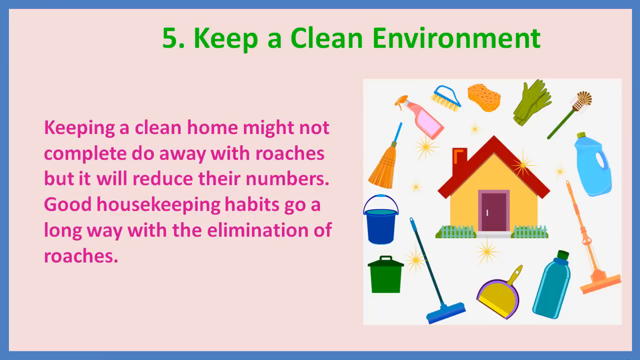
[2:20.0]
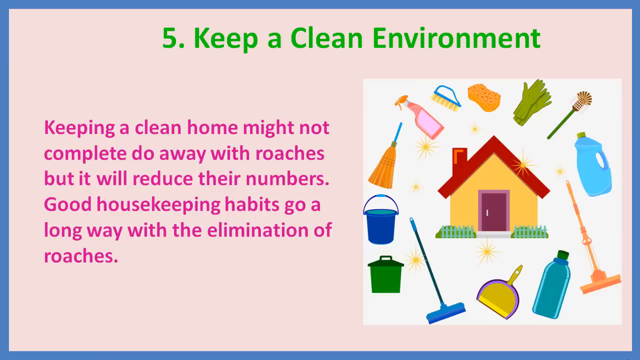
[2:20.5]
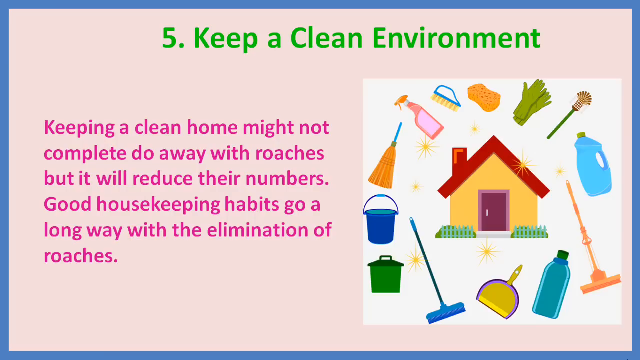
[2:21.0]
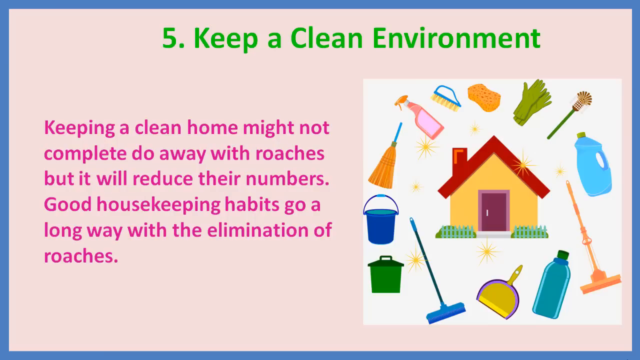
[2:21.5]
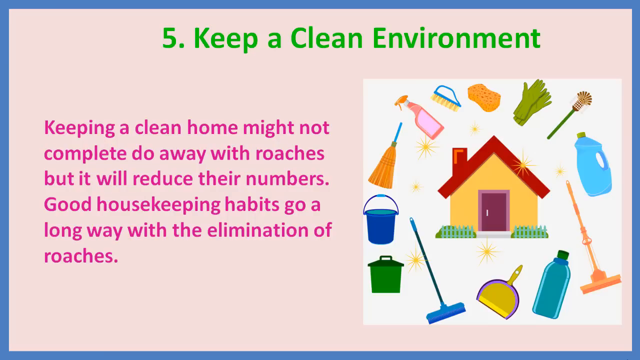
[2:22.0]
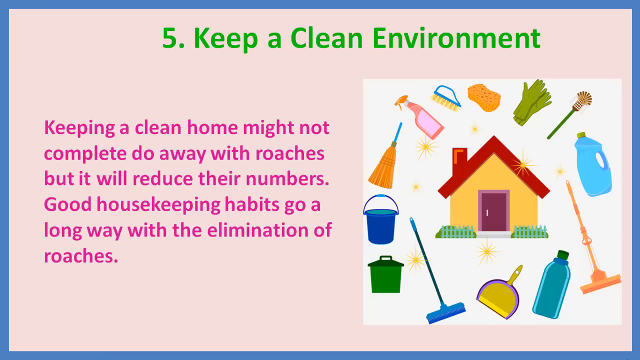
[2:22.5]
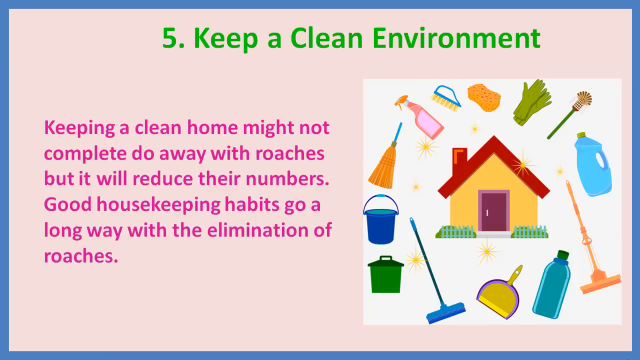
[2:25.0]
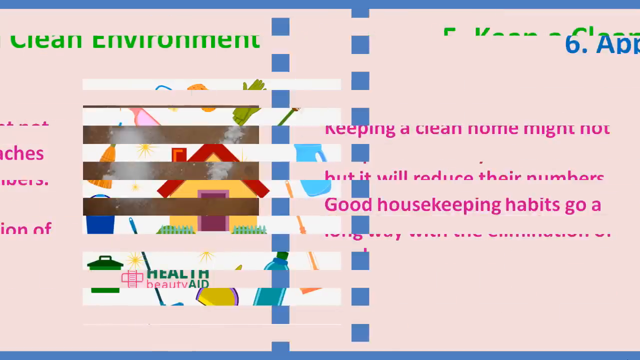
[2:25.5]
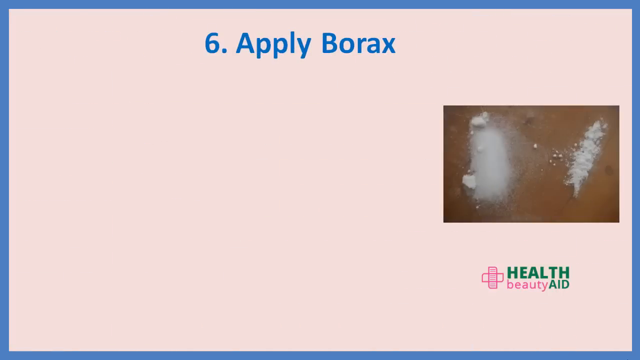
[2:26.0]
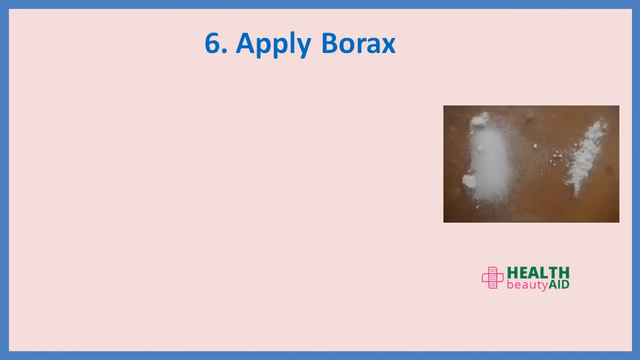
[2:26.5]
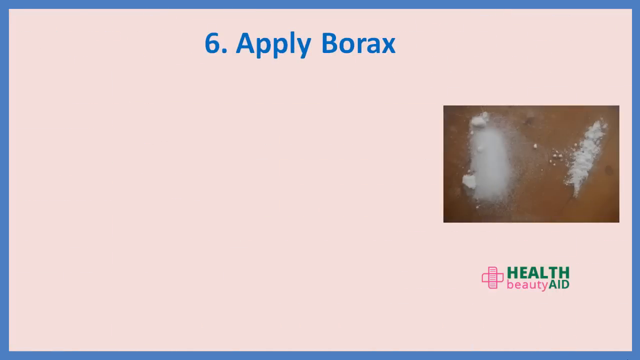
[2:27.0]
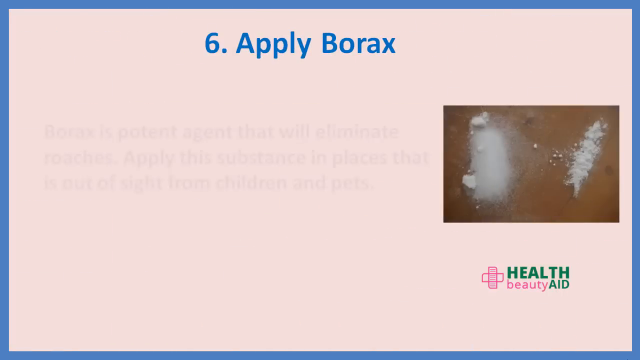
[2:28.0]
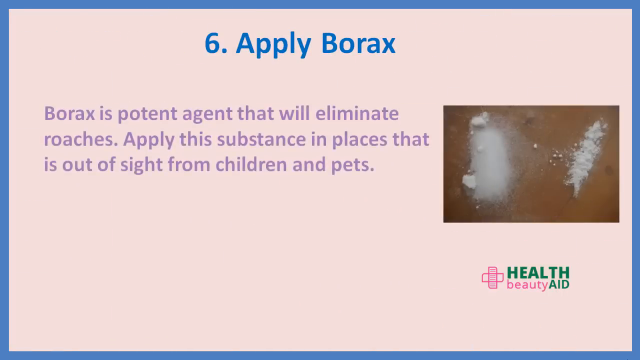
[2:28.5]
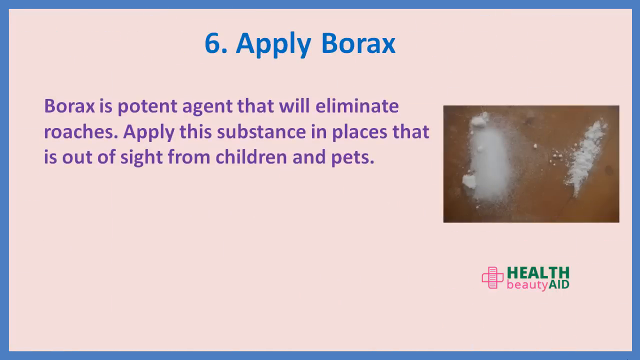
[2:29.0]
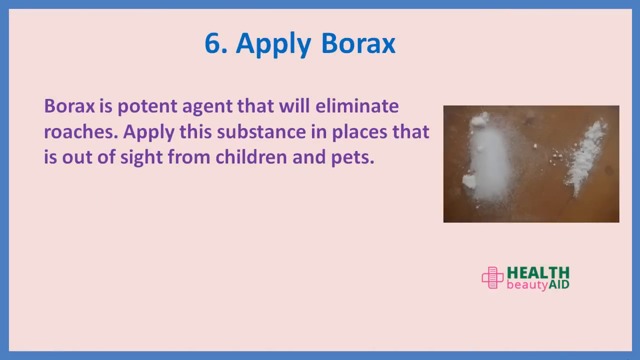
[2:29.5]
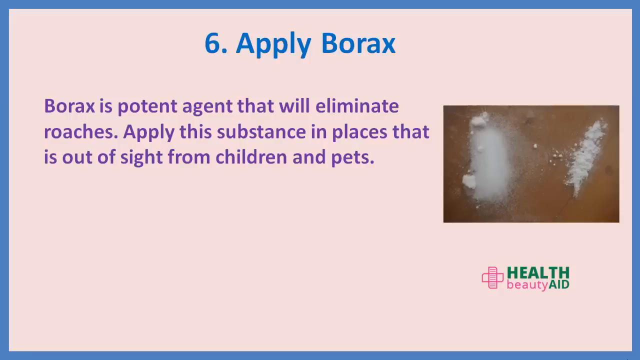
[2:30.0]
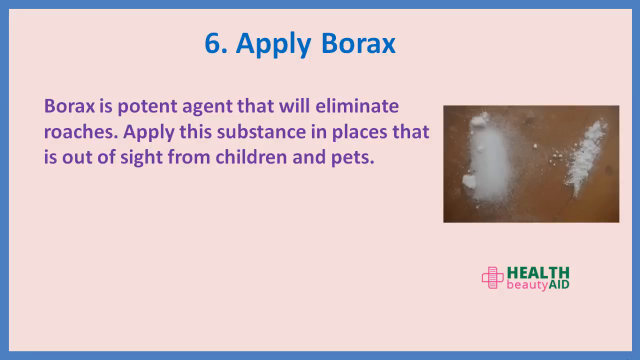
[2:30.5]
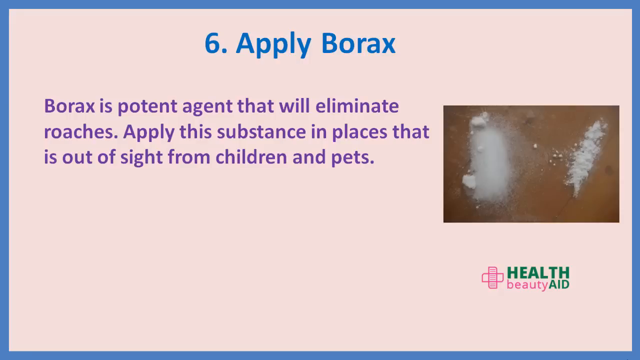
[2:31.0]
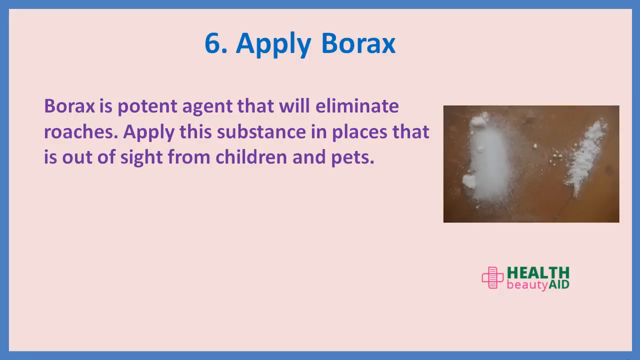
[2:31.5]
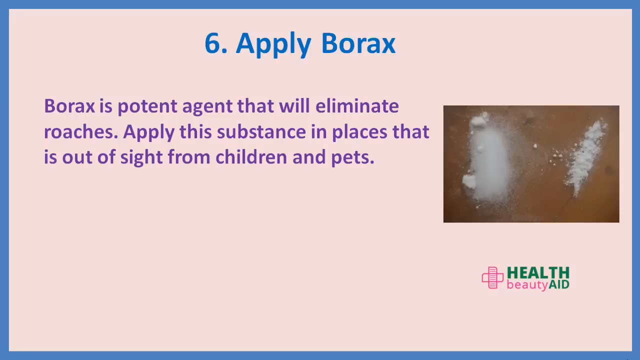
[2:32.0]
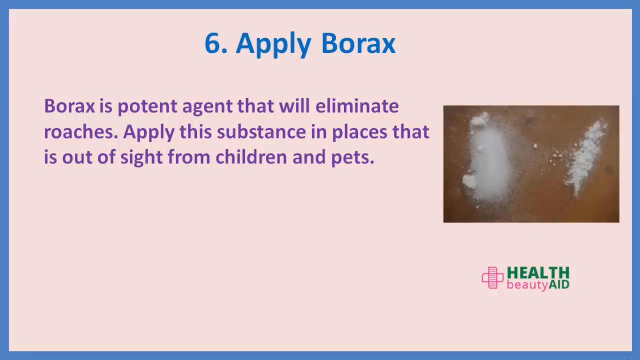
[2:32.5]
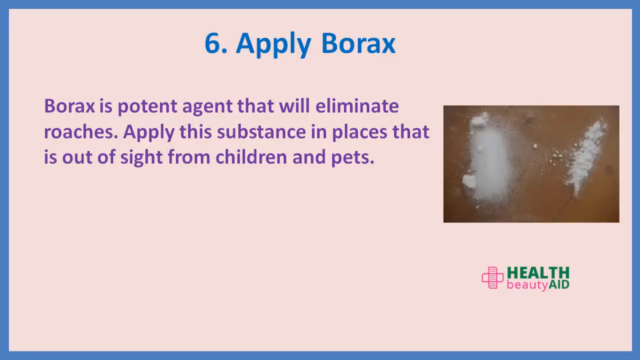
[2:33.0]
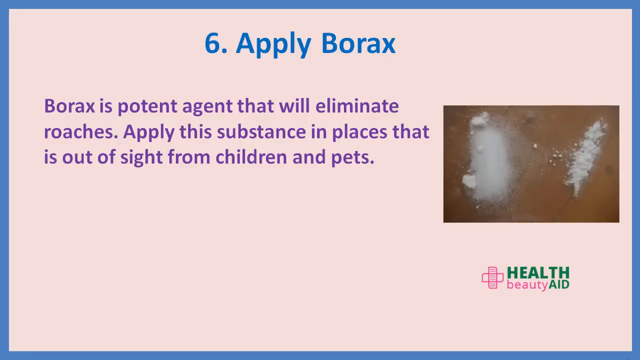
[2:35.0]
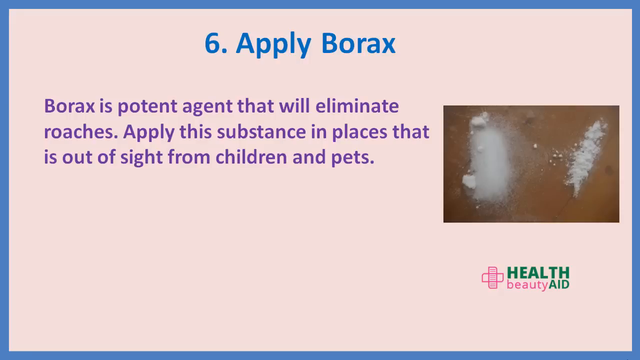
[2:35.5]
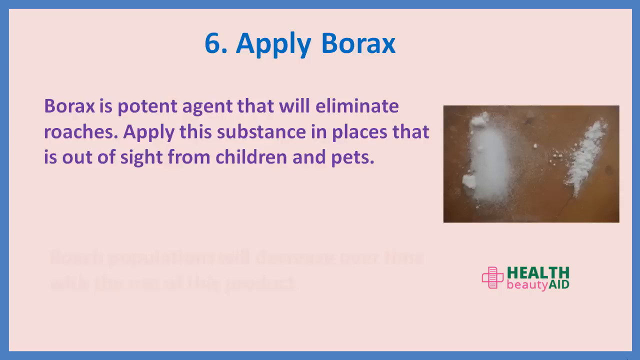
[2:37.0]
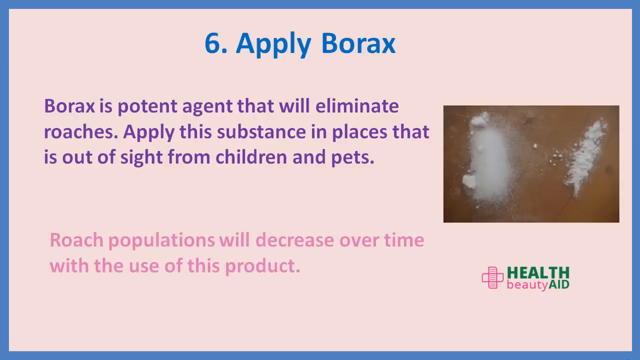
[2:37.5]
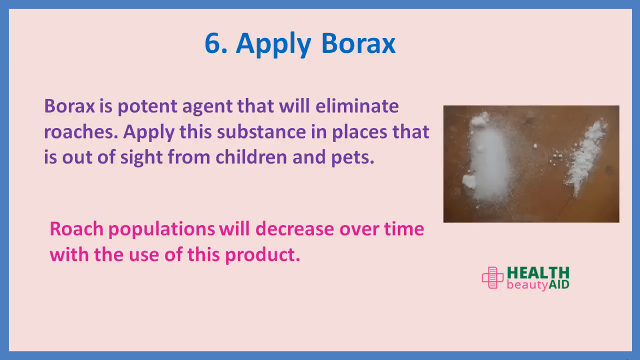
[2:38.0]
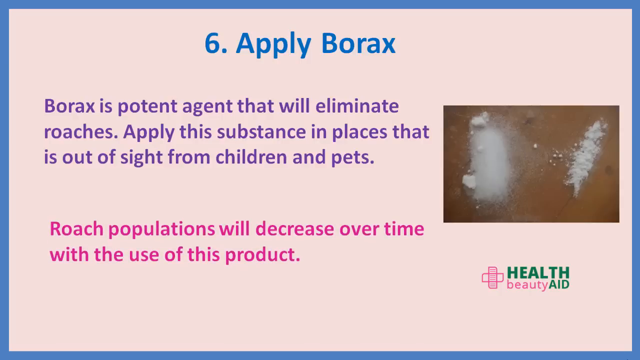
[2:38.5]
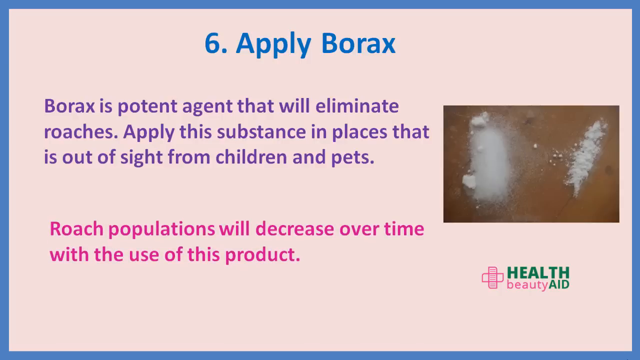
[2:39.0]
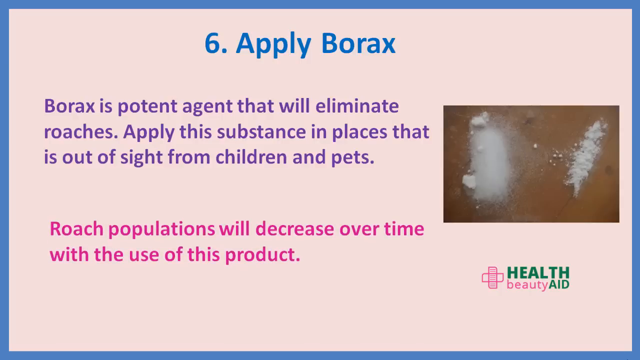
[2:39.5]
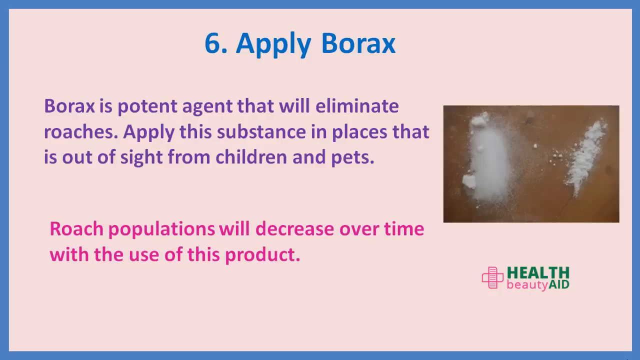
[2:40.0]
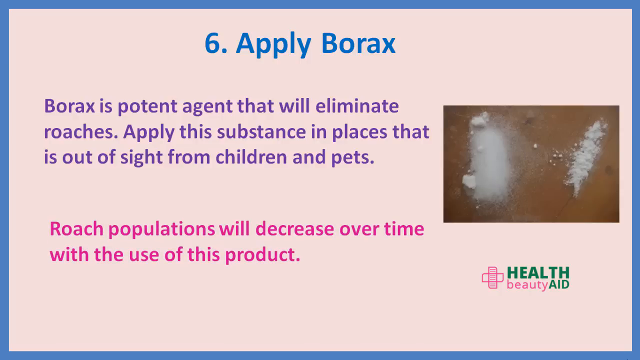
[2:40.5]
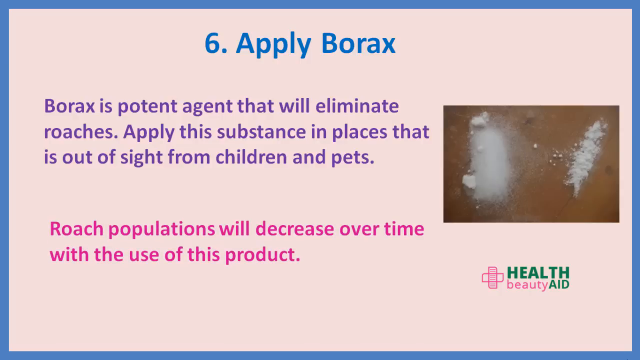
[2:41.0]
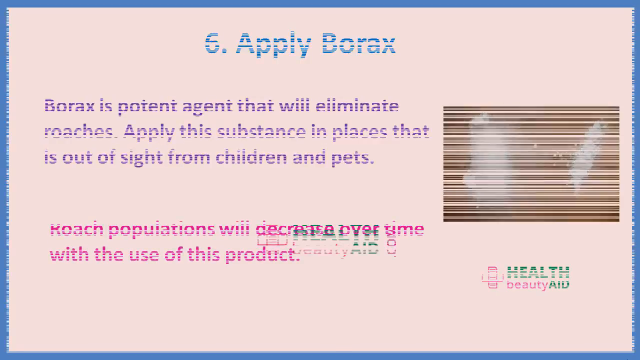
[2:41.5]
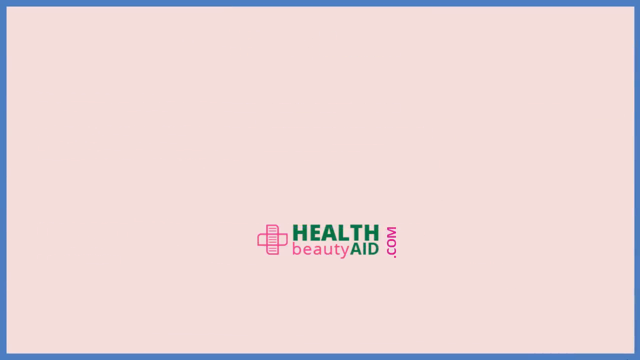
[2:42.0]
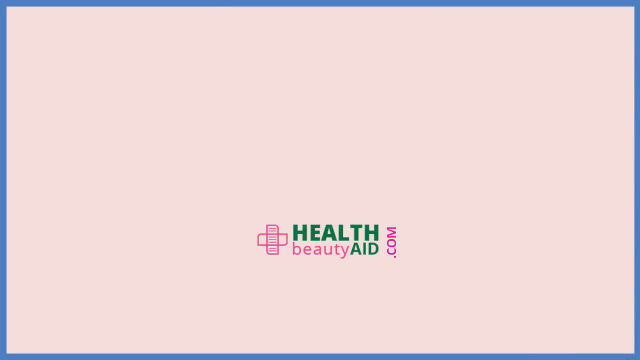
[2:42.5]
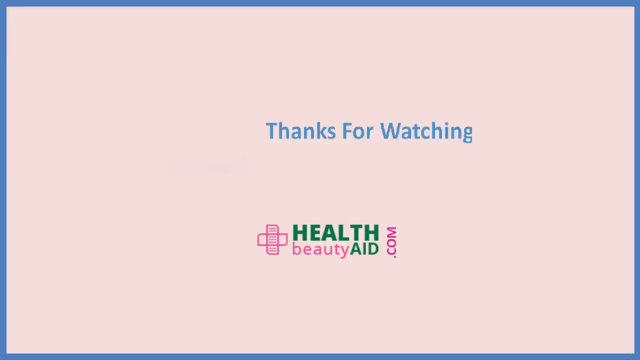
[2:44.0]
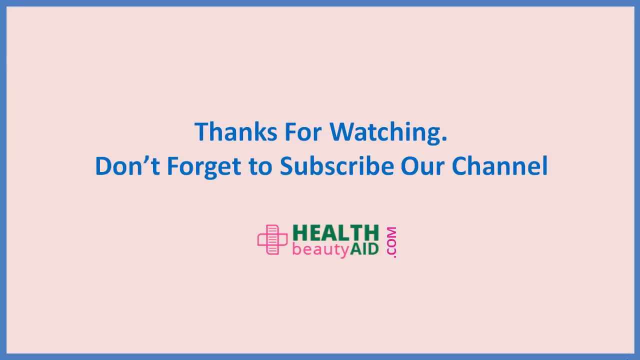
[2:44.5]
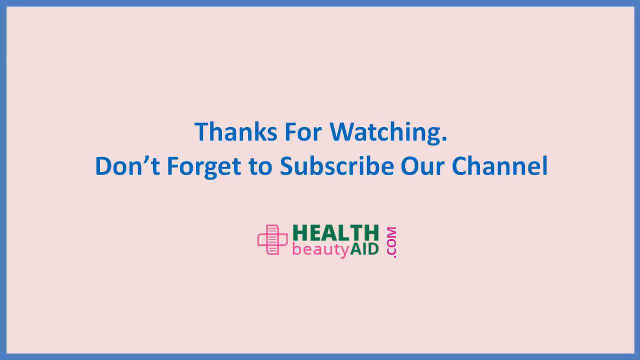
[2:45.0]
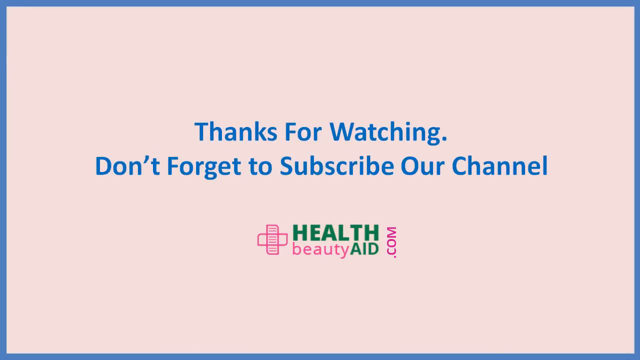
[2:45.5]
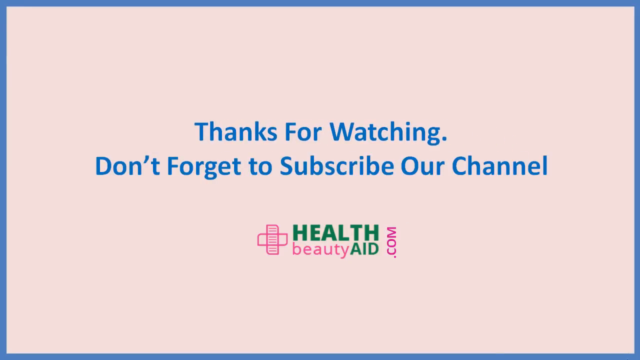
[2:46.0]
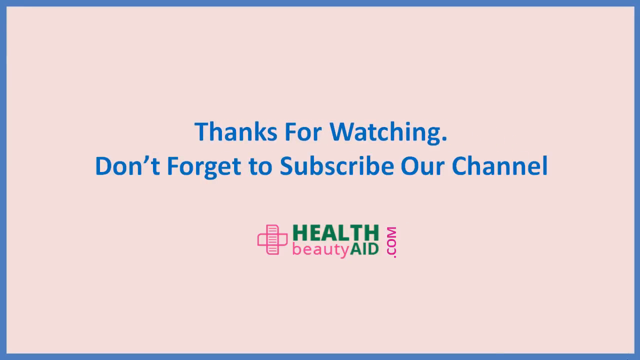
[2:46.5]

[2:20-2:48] A slide with a blue frame and light pink background has green lettering at the top saying "keep a clean environment." Below, purple lettering reads "keeping a clean home might not completely do away with roaches, but it will reduce their numbers. Good housekeeping habits go a long way with the elimination of roaches." To the right is a white box. In its center is an orange house with a red roof and a double purple door, with two green picket fences at the bottom left. At the very top center is an orange sponge; to its right are two green gloves, and to the right of those a brown toilet cleaner with a green stem. At the bottom right is a blue bottle, below that an orange mop, to the left a blue bottle with a cap, to the left of that a yellow and purple rimmed dustpan, then a blue-handled mop, then a green pot. Above the pot is a blue pail with a blue handle, above that an orange brush with a blue handle, to its right an orange and light purple spray bottle, and above that a yellow brush with a blue handle. The next image has a light blue frame and a light pink background. Blue lettering at the top says "six applied borax." Purple lettering below begins "borax is a potent agent that will eliminate roaches." Below, in a lighter shade of purple, it reads "roach populations will decrease over time with the use of this product." To the right is a gray box with what seems to be some white powder on the left and right sides. Below, green lettering says "health," purple lettering below says "beauty," and green lettering to the right says "aid," with a purple cross like two band-aids at the far left. The last screen has a blue frame and a light purple background, with blue lettering in the center saying "thanks for watching, don't forget to subscribe to our channel."